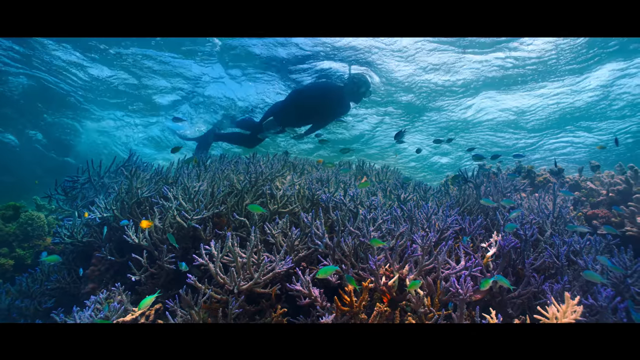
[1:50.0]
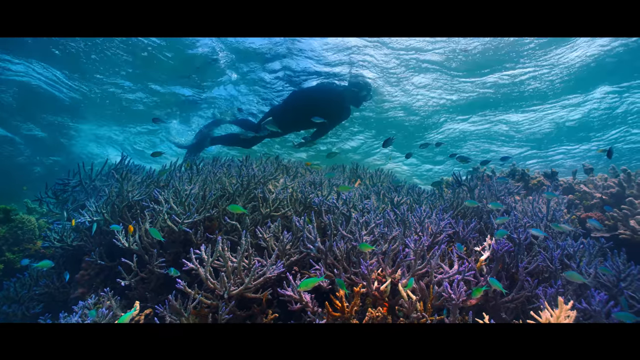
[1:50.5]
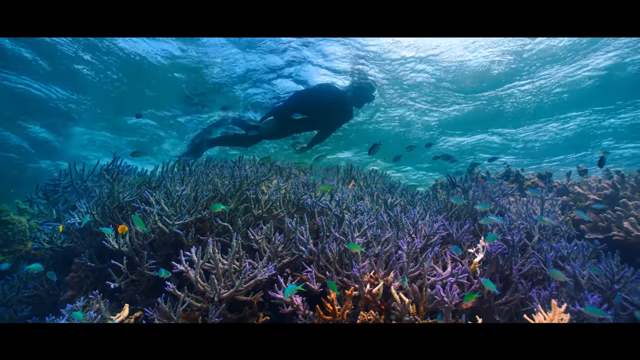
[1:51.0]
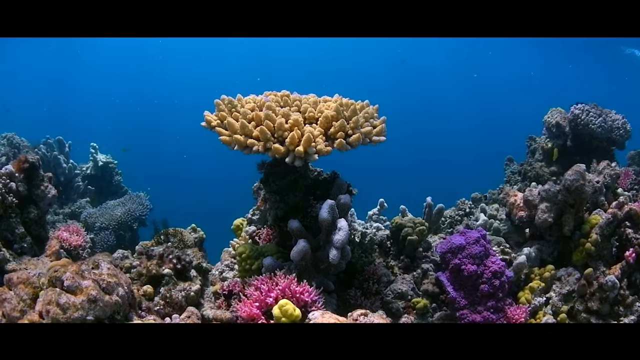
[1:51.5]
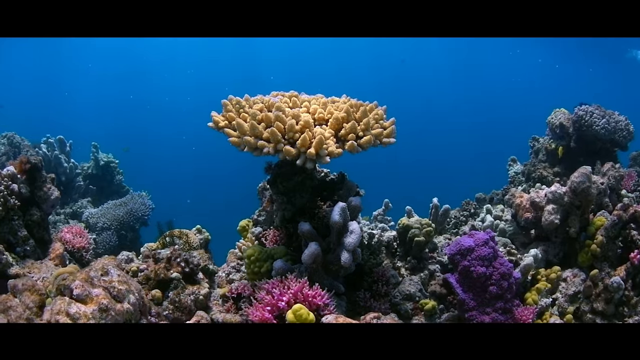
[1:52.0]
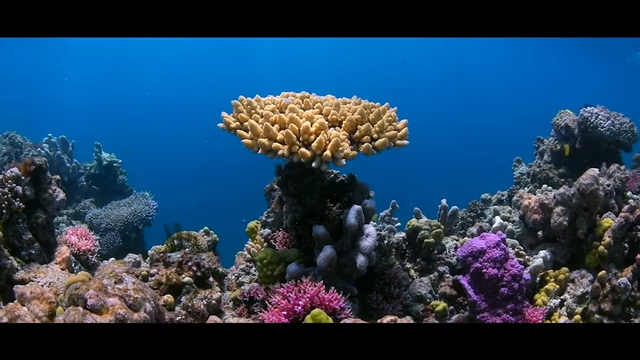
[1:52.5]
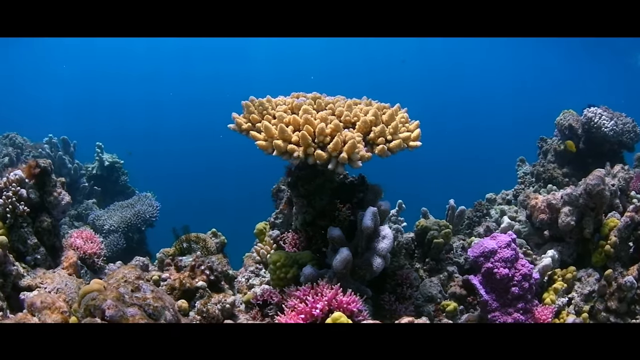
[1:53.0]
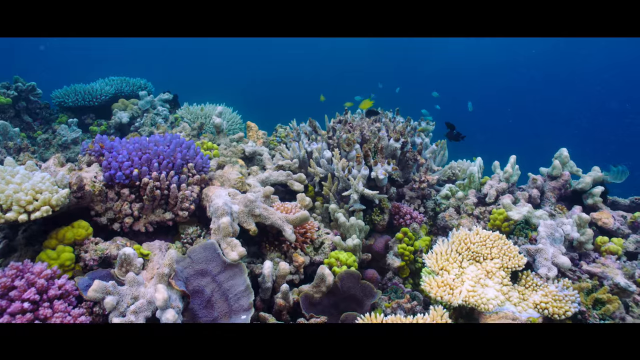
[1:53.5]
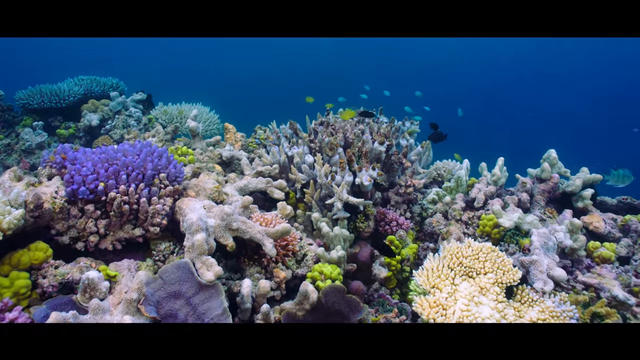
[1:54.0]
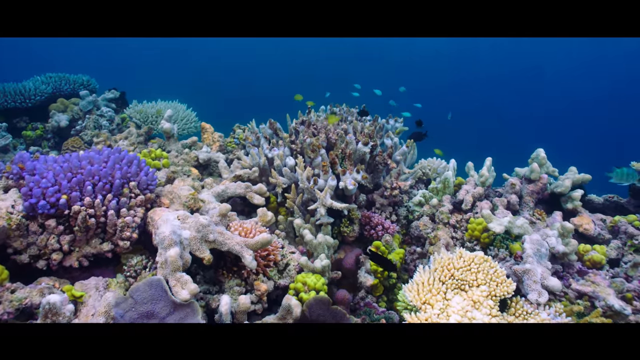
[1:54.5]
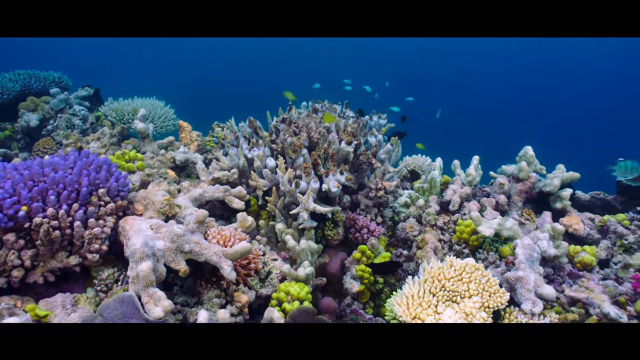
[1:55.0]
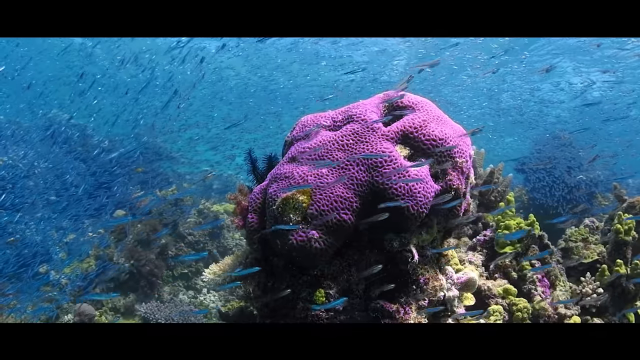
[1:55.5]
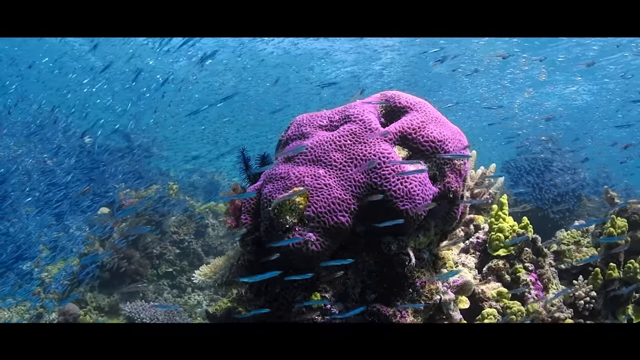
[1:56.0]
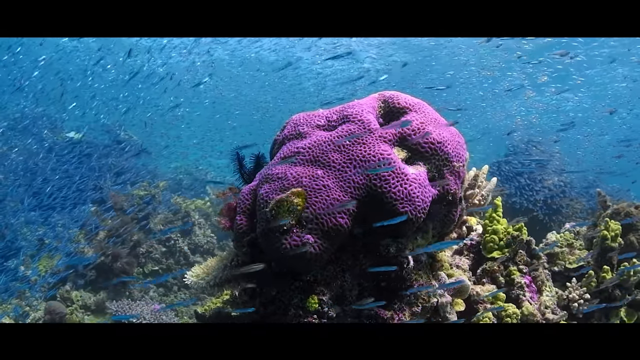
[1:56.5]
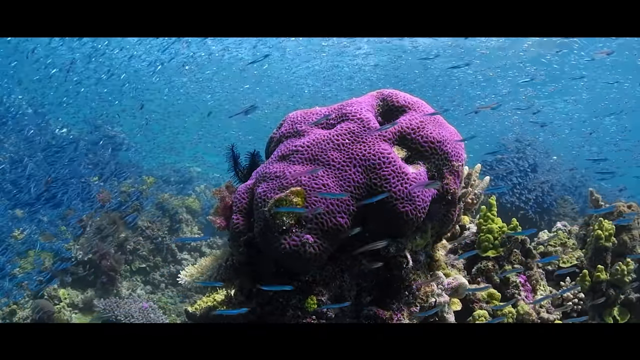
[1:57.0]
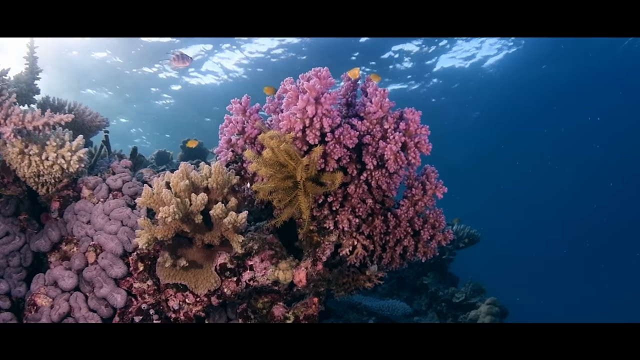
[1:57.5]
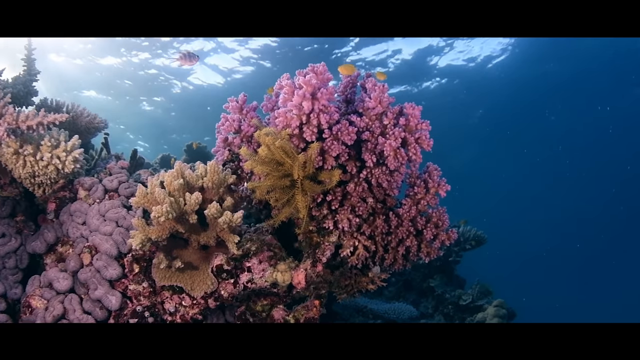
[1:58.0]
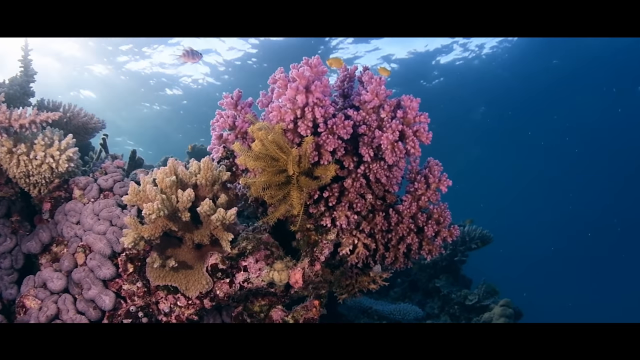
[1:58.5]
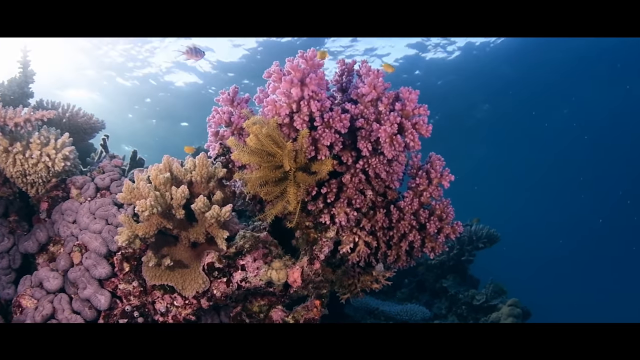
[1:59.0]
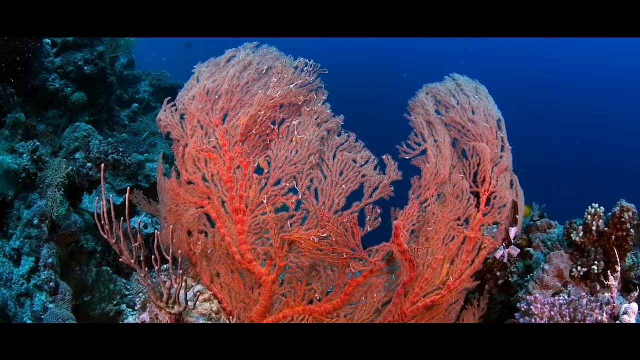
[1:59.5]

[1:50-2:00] A diver skims over the top of a coral reef, with the surface about six feet above the reef. The reef is healthy, with lots of purples and oranges especially, plus yellows, blacks, grays, whites and greens. Hundreds of thousands of tiny fish swim around the corals, and many schools of little fish of many different species swarm all about the reef. The water is clear and a deep aqua blue. The diver is kind of skimming just under the surface, with his snorkel poking up out of the water. His dive suit is black, and he wears an eye mask, a mouth snorkel and large flippers. He appears to be a Caucasian male with brown hair. Some of the corals look feathery, some look like brains, and others look like purple cacti.